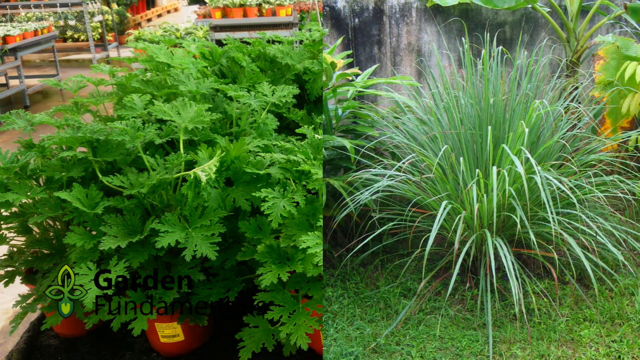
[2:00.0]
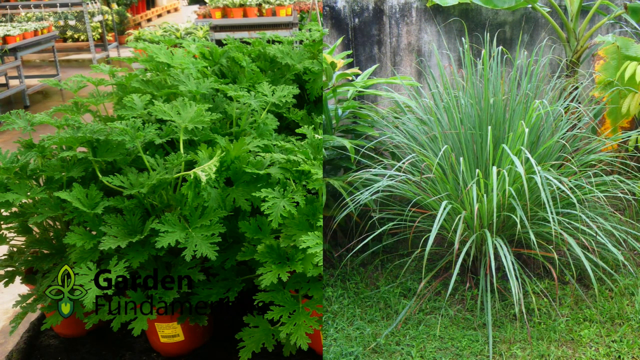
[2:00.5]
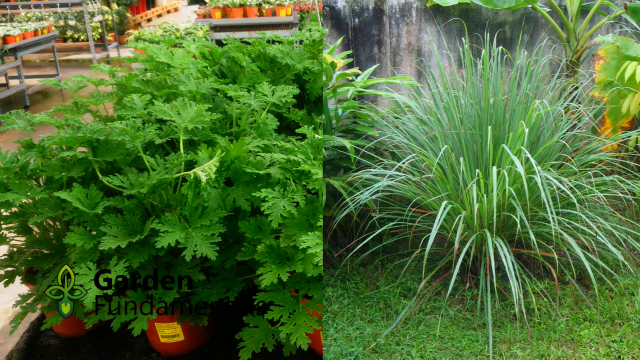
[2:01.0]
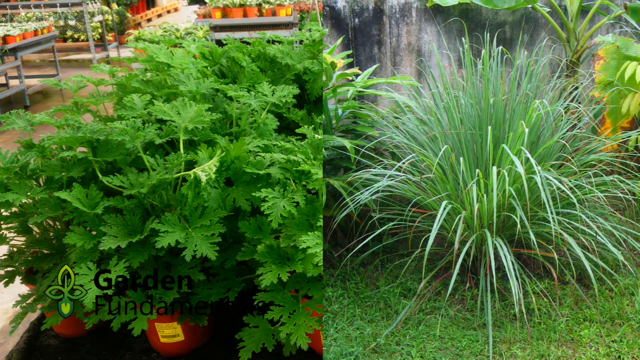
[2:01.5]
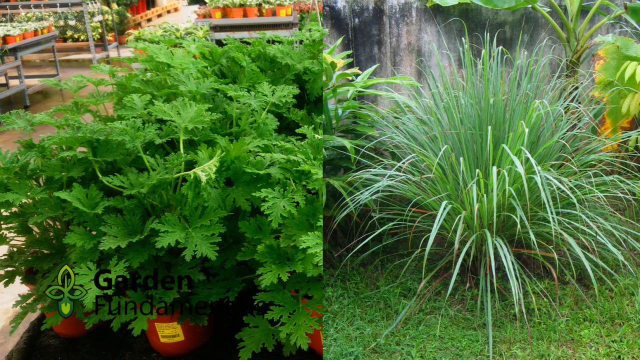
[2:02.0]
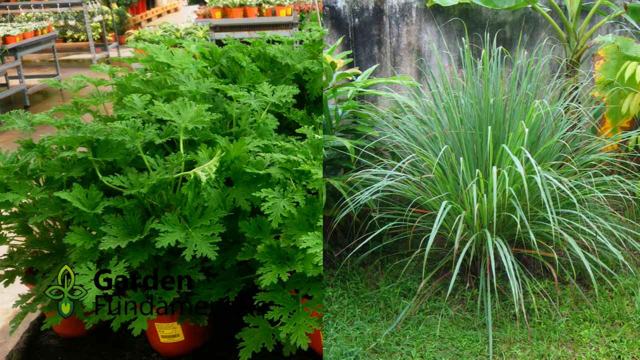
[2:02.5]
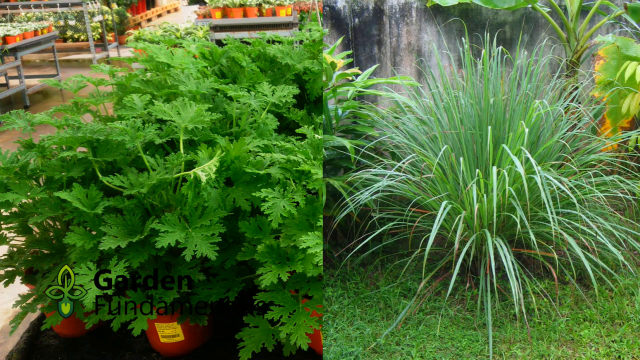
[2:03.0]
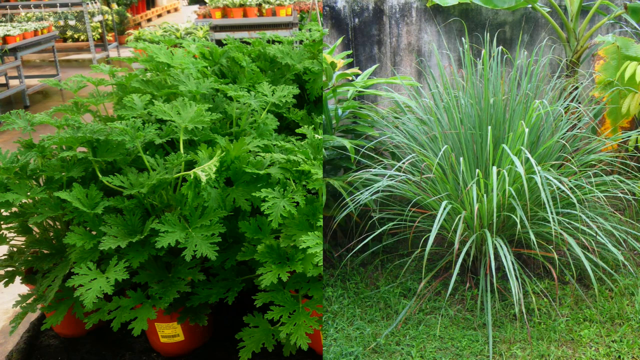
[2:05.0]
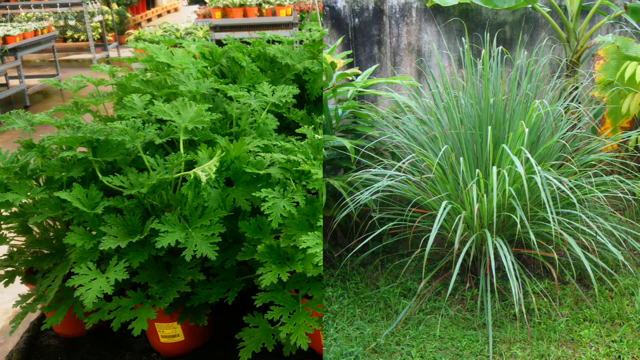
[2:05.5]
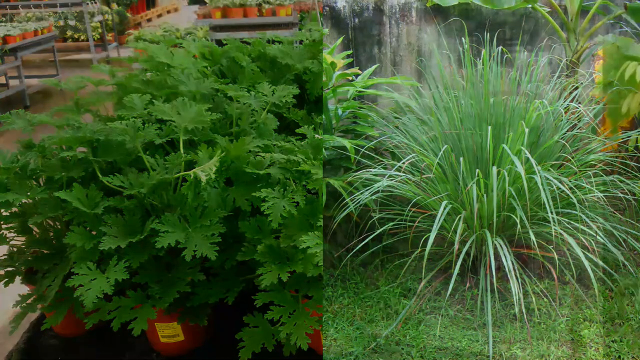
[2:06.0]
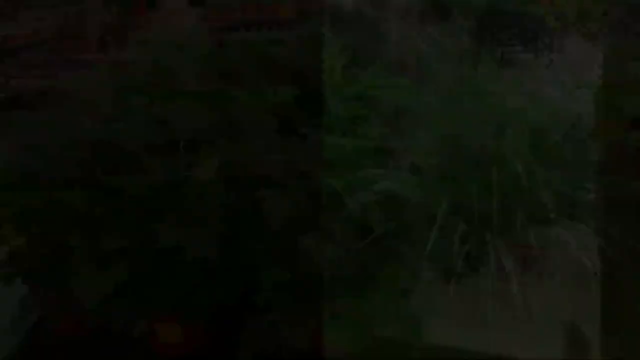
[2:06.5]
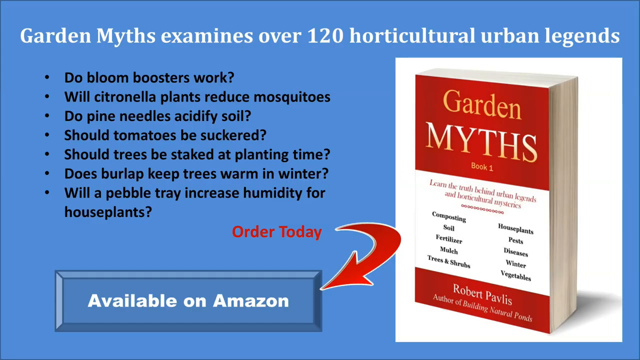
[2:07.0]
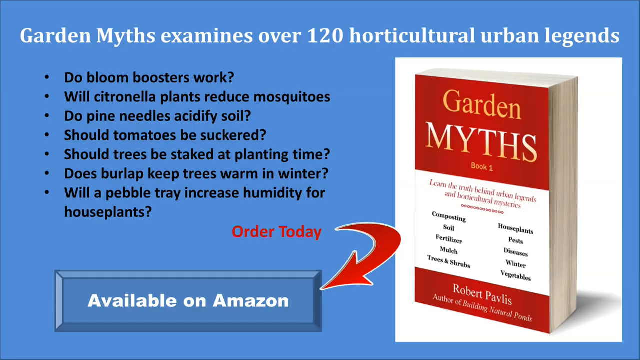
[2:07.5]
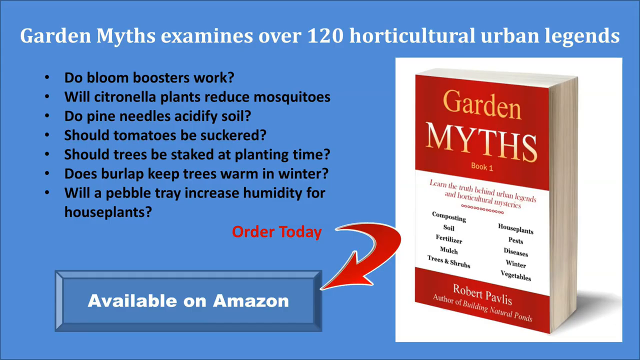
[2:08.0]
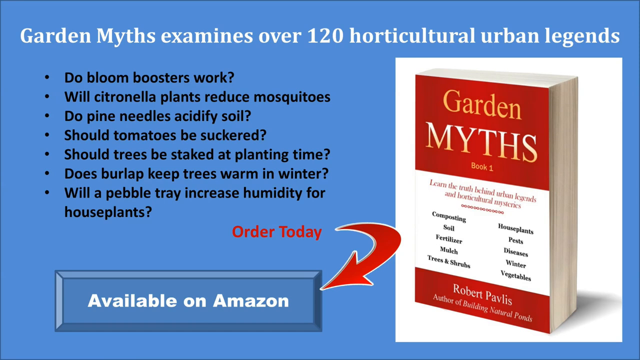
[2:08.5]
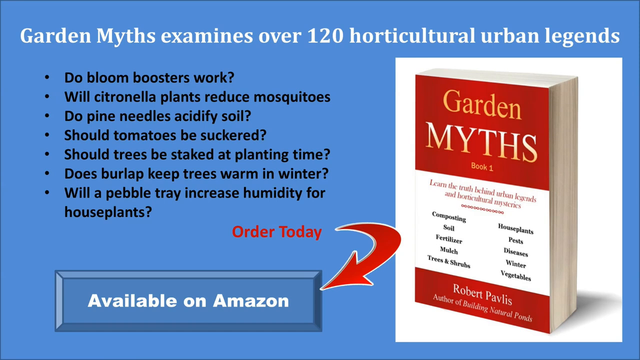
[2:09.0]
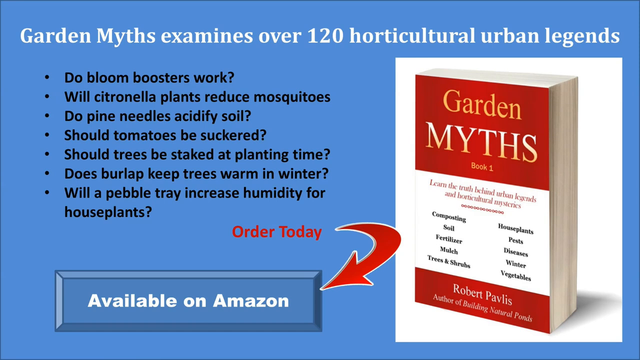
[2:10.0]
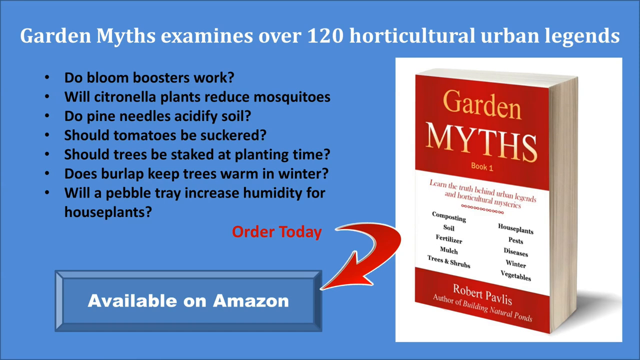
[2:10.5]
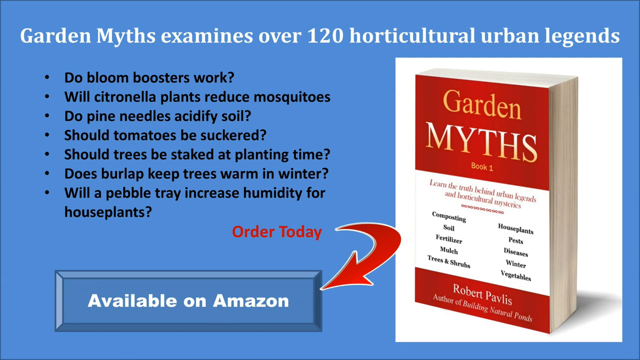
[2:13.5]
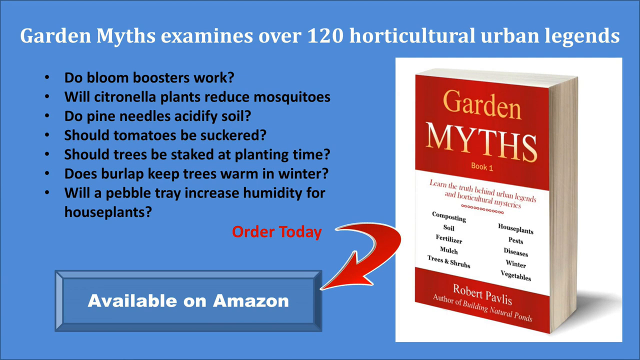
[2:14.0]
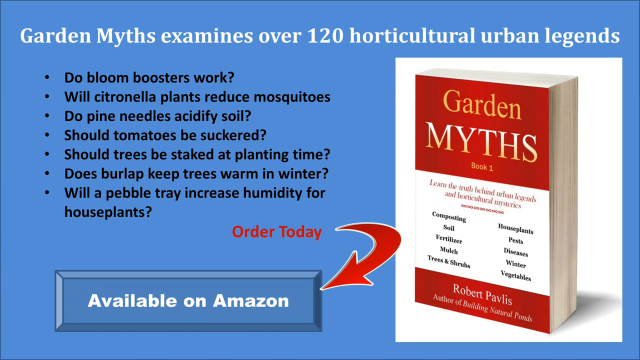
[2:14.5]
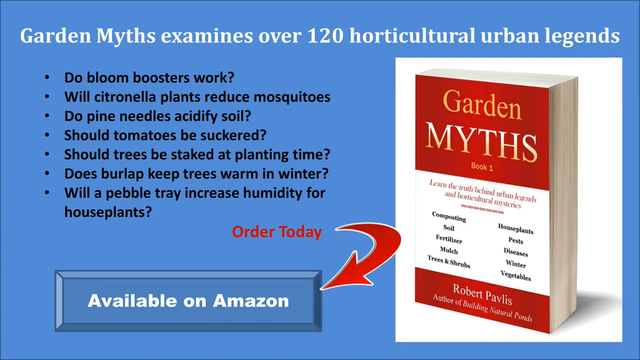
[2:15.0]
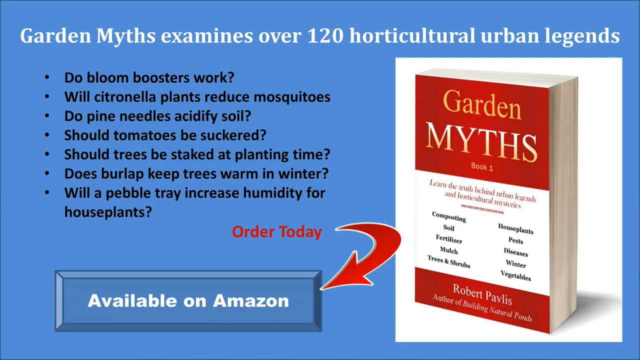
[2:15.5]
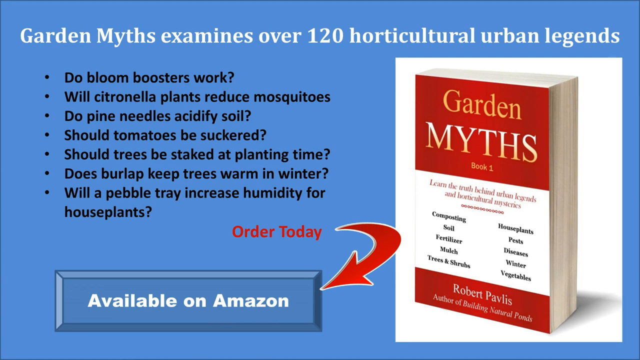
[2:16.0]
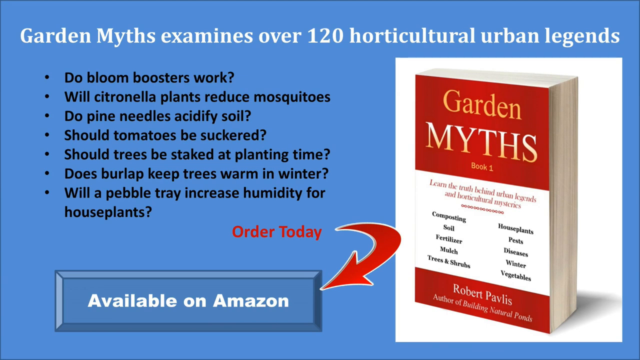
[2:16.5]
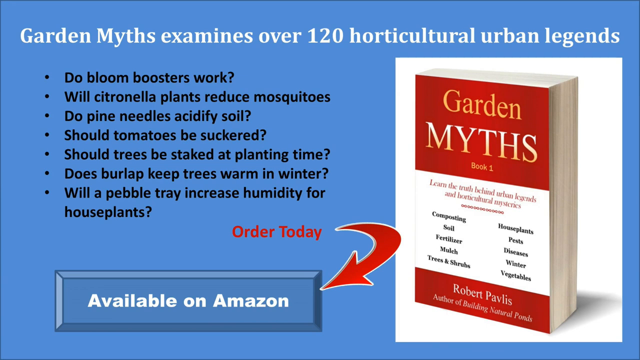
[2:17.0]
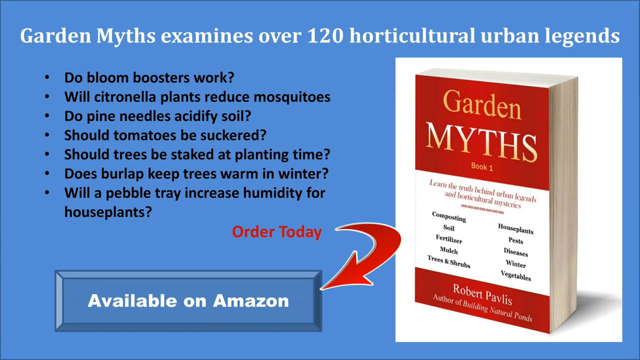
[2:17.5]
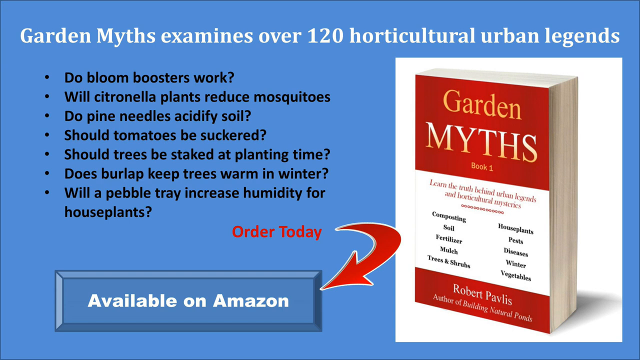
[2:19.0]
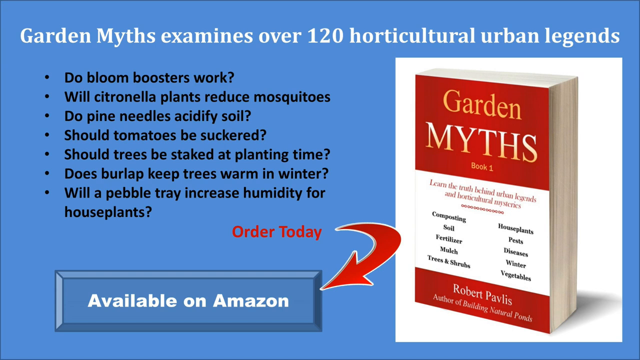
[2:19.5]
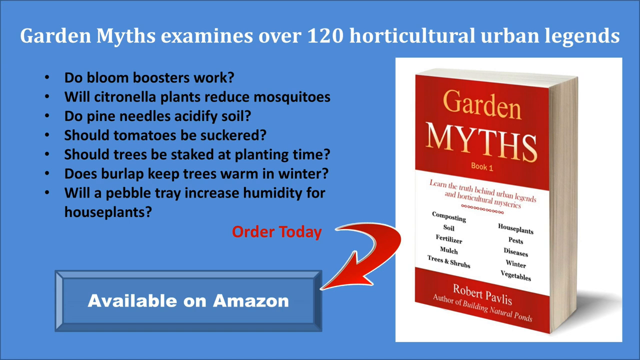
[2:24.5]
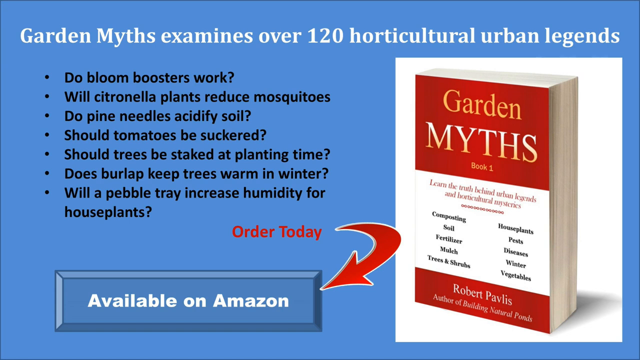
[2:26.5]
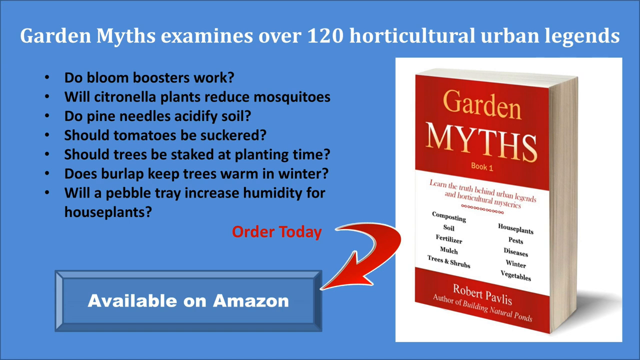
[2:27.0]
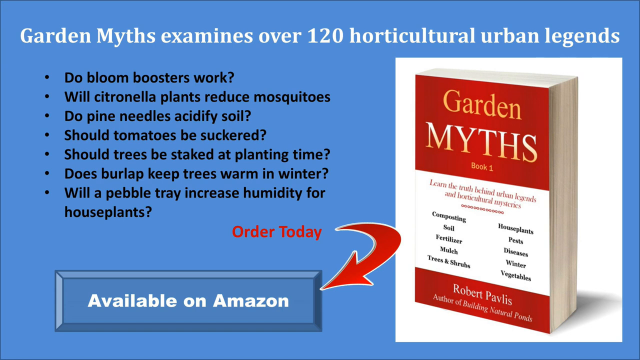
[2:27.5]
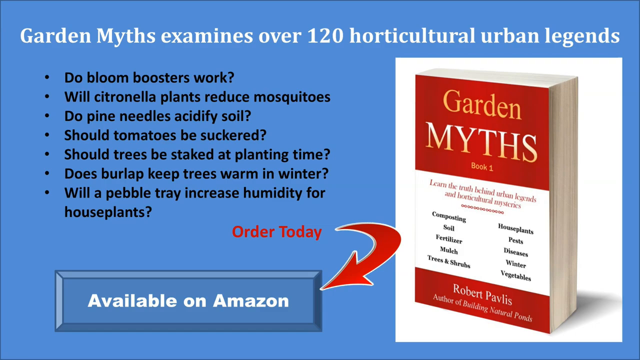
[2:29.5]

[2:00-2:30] Two plants are shown: a citronella plant on the right and some lemongrass plant, both looking like they are in a garden center, with other plants around them in different pots. The Garden Fundamentals logo is in the bottom left. The two separate pictures of the two plants are side by side, then fade to black. A new slide on a blue background reads "Garden Myths examining over 120 horticultural urban legends", with some other things written there. It presents Garden Myths as a book that can be ordered today, with a button at the bottom that looks like a link to Amazon.